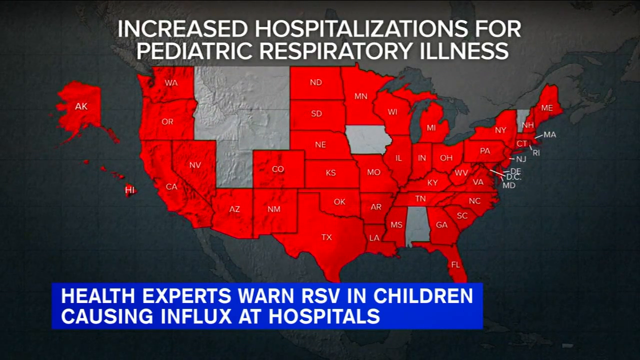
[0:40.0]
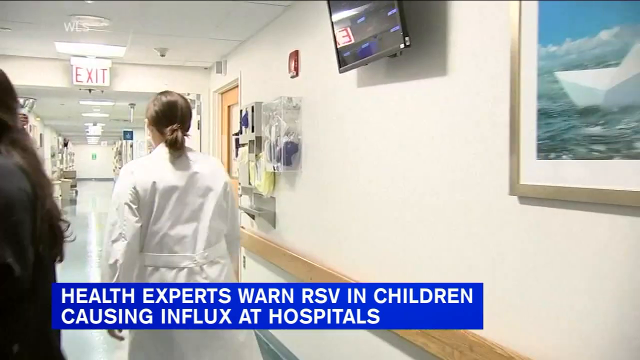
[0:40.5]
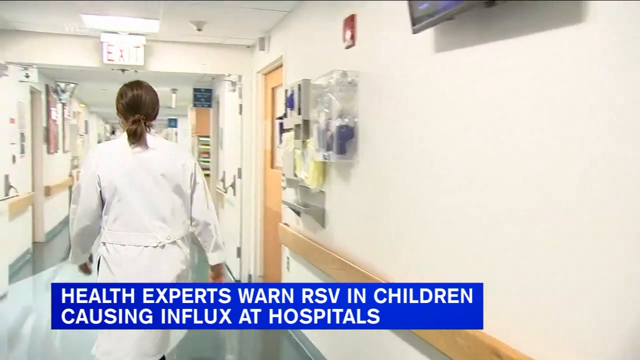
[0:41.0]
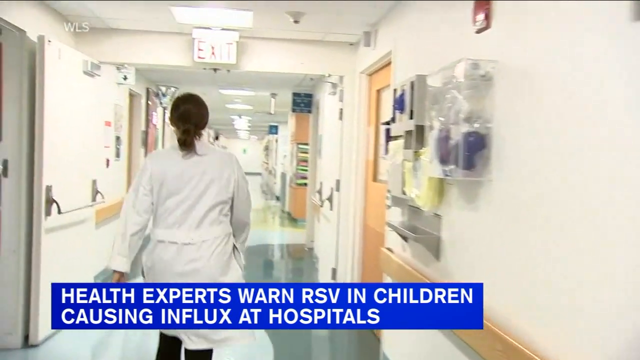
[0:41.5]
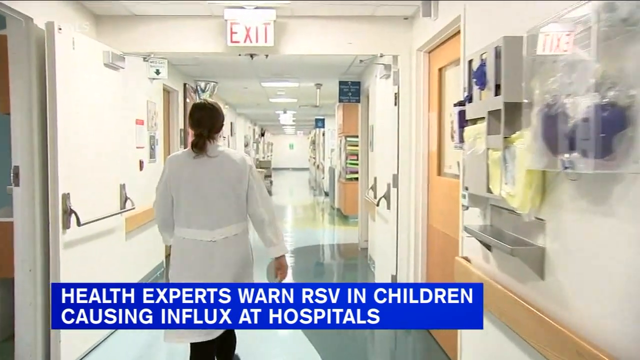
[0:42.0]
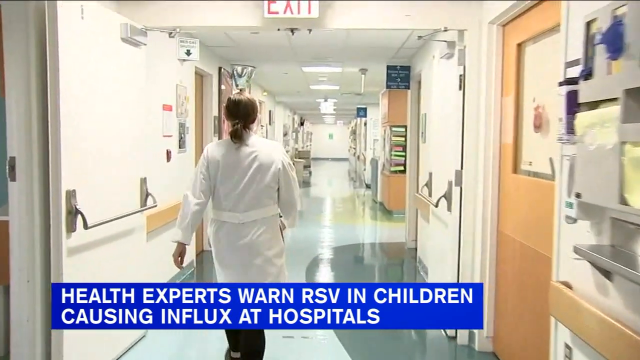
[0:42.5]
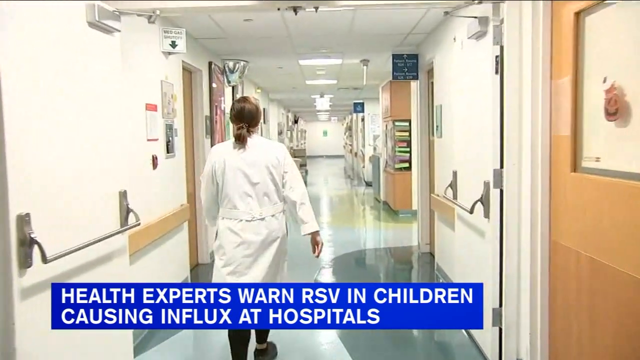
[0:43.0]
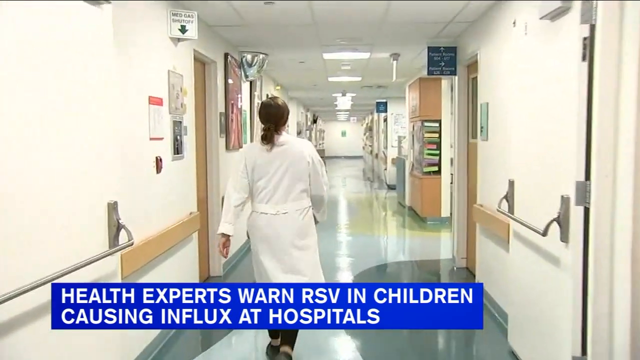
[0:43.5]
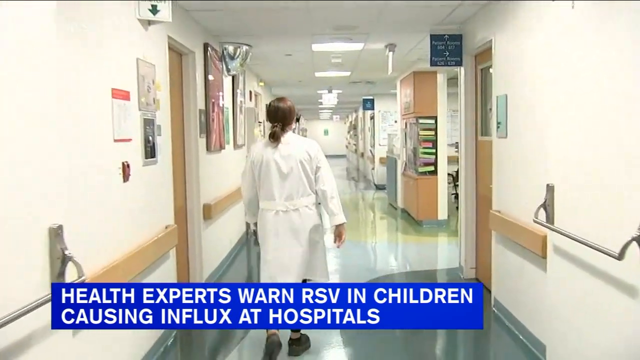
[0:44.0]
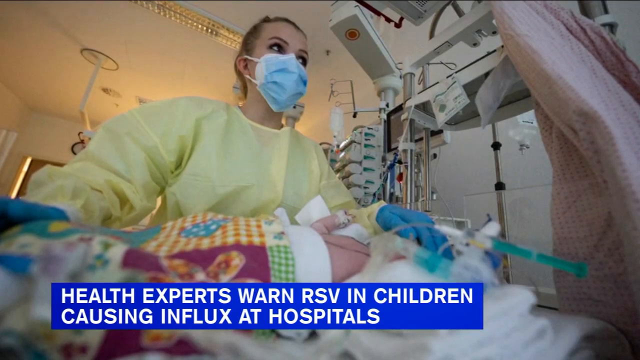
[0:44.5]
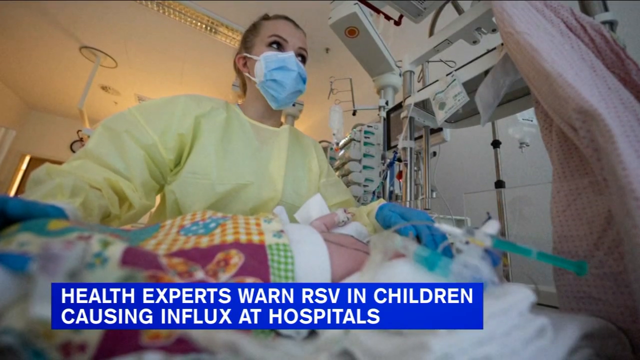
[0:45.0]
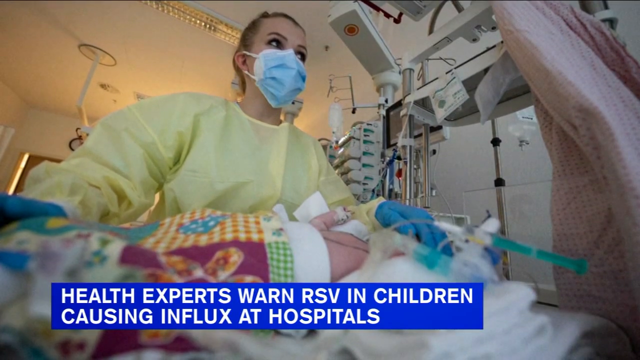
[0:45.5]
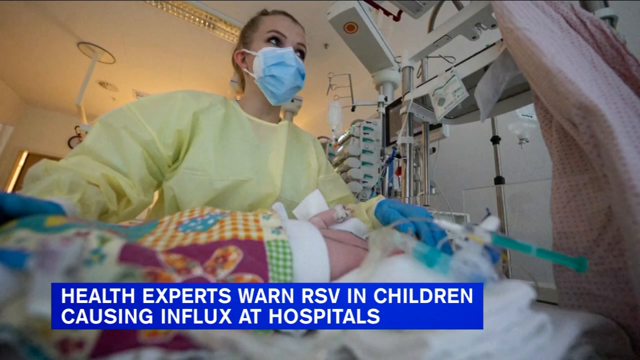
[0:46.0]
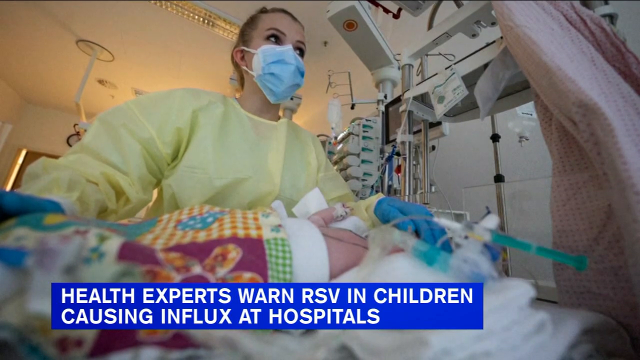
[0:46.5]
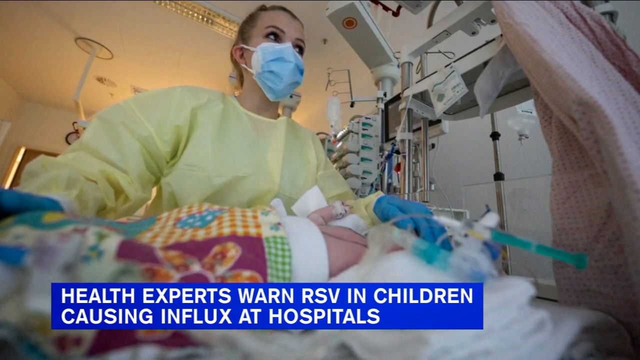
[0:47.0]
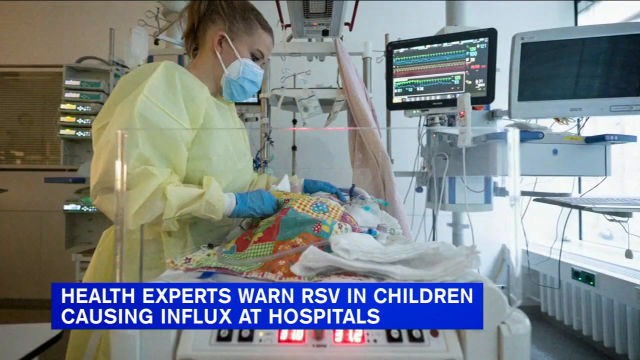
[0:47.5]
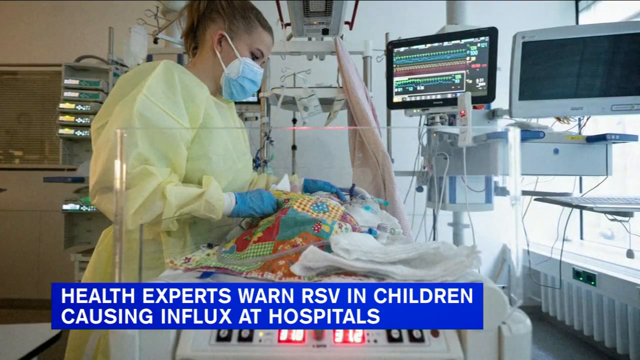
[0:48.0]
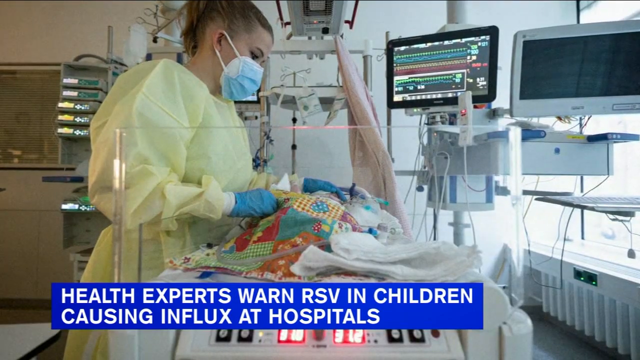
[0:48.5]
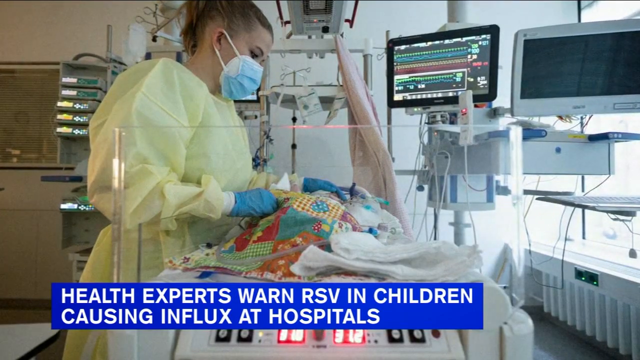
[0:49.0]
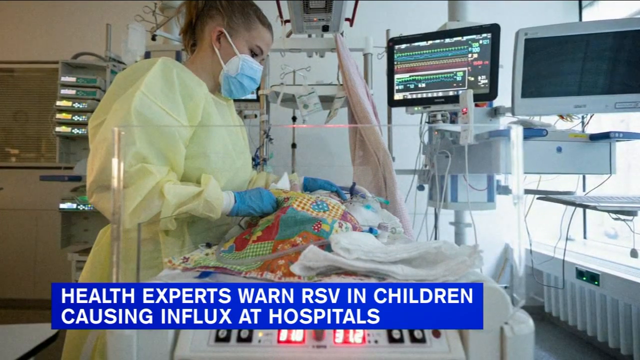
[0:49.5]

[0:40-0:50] The camera follows behind a doctor, a woman in a white lab coat, as she walks through a hospital hall. In the next scene, a woman in yellow scrubs and a blue medical mask attends to a small baby lying beneath her. The baby is wrapped in a quilt, with different tubes coming from its mouth. A farther-away side view of the same scene shows the woman on the left attending to the baby, who lies in bed on the right, with different monitors in the upper right of the frame. The doctor wears blue gloves.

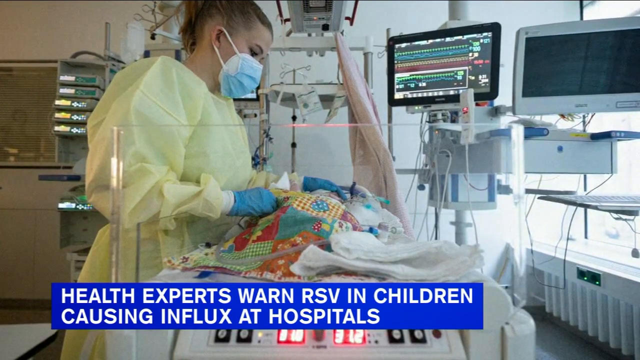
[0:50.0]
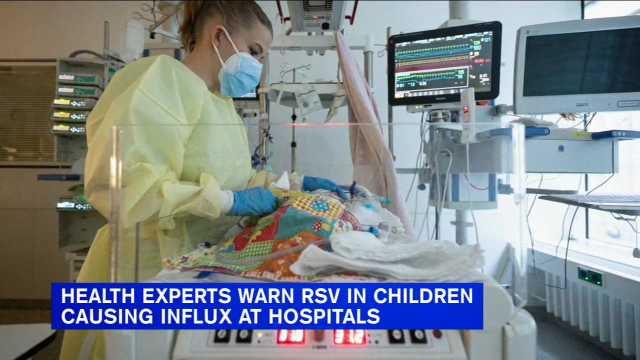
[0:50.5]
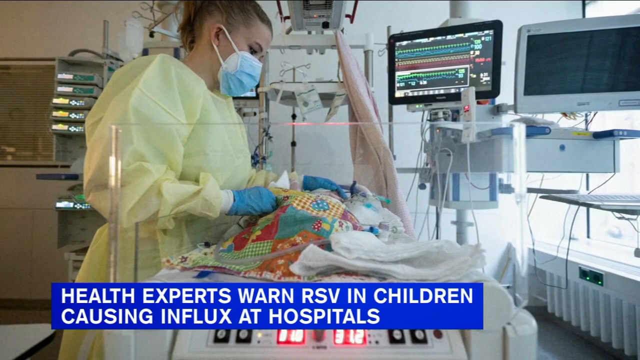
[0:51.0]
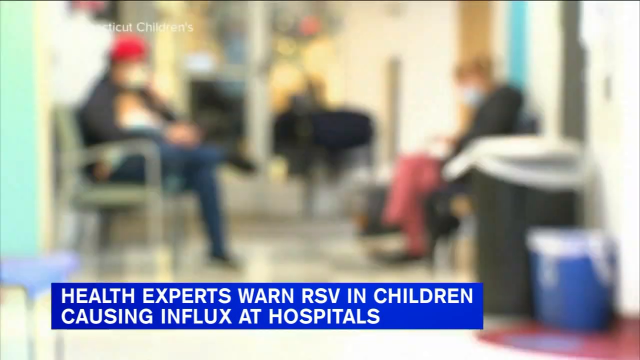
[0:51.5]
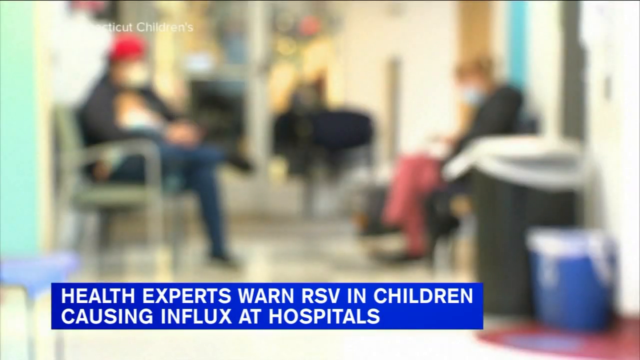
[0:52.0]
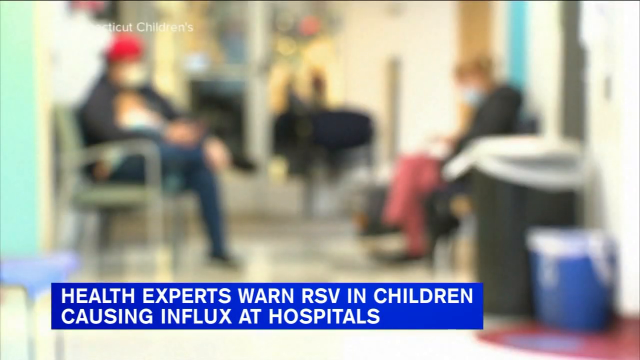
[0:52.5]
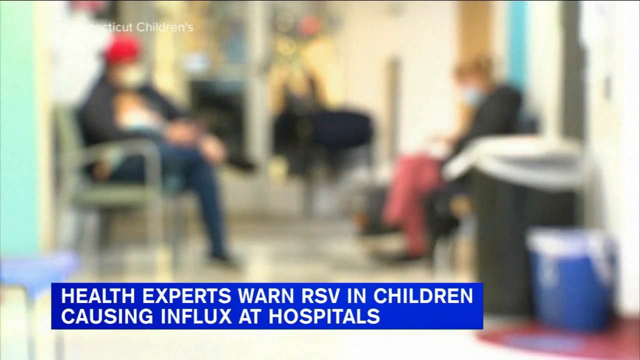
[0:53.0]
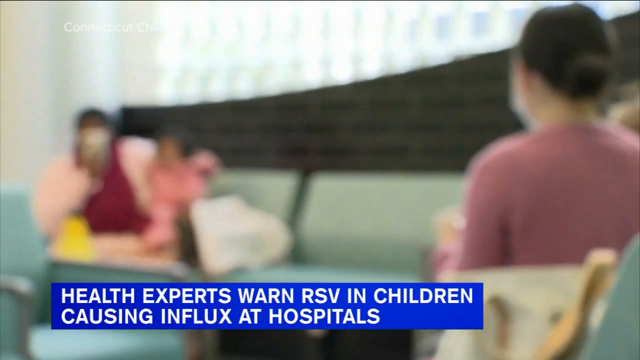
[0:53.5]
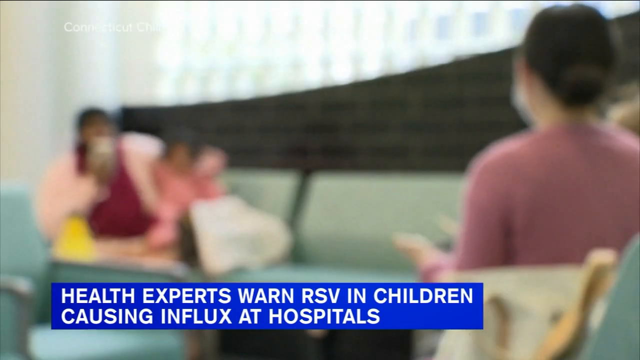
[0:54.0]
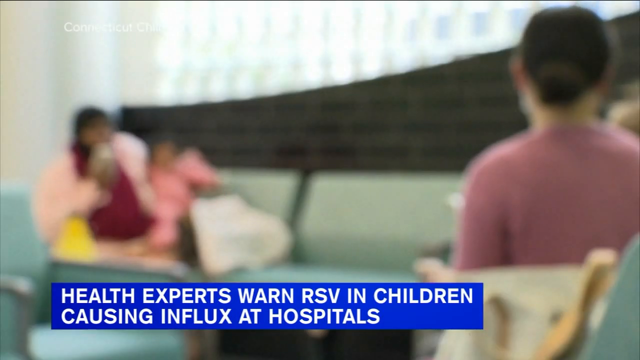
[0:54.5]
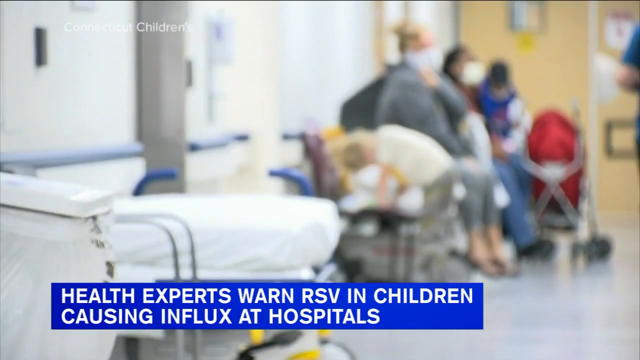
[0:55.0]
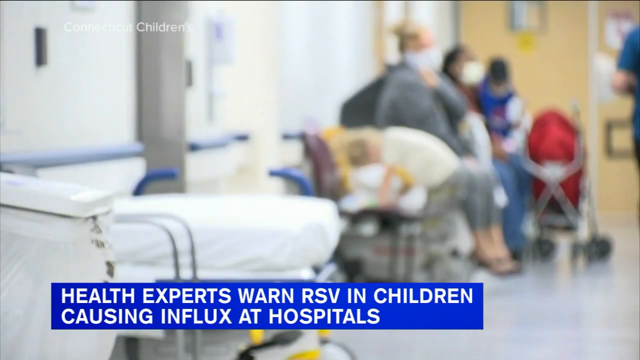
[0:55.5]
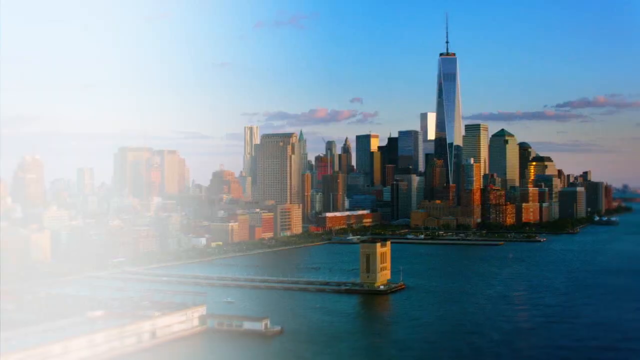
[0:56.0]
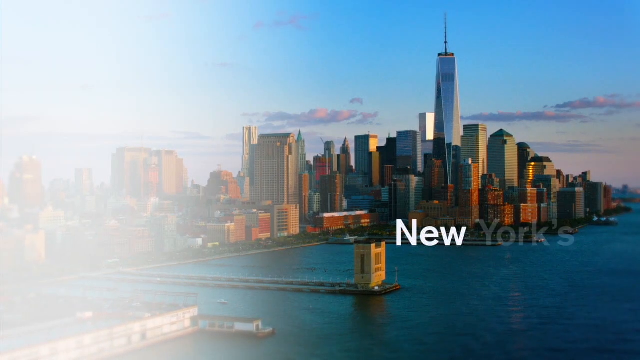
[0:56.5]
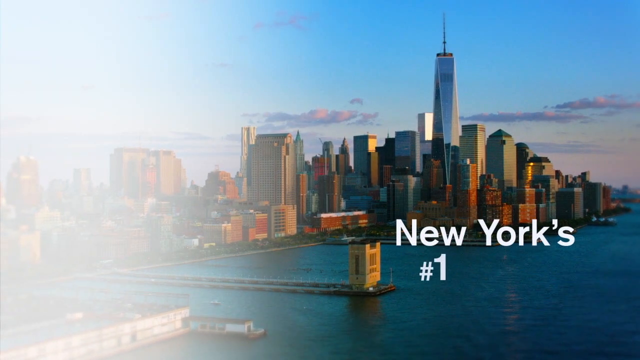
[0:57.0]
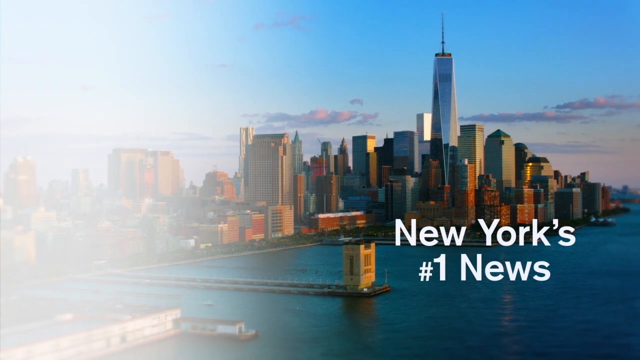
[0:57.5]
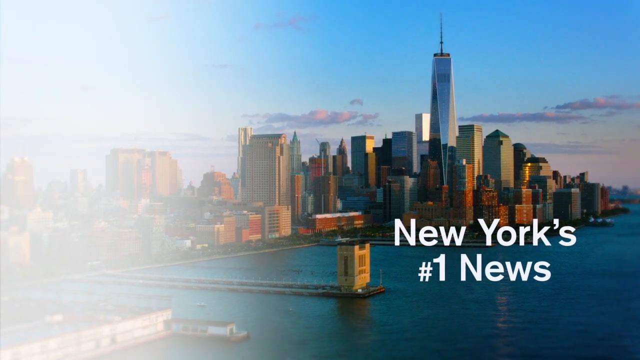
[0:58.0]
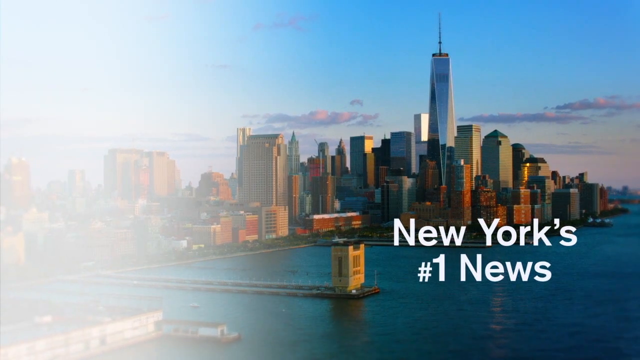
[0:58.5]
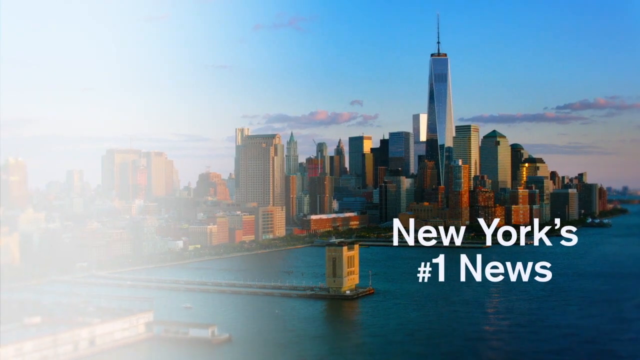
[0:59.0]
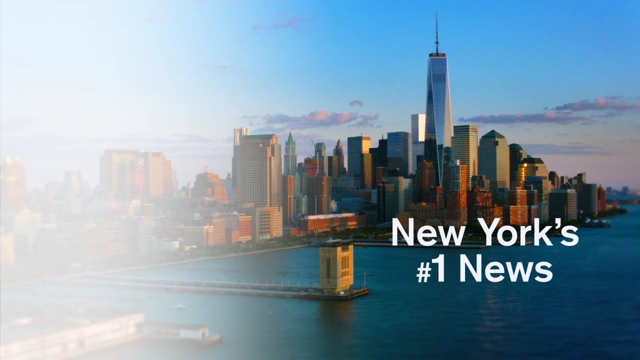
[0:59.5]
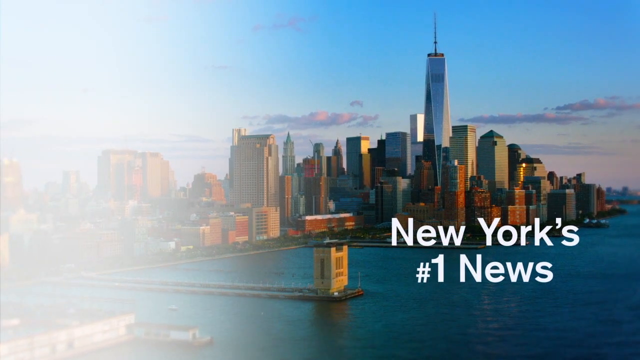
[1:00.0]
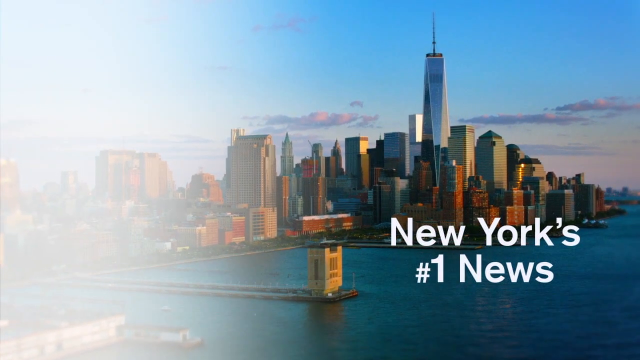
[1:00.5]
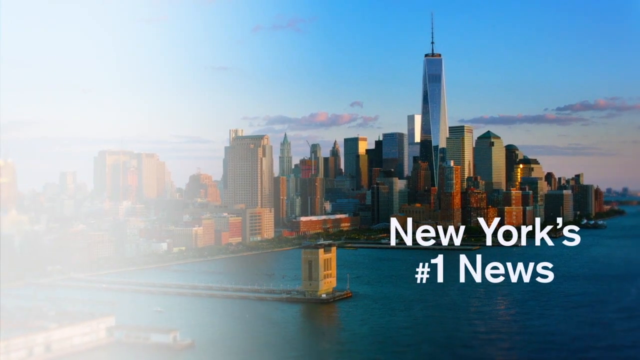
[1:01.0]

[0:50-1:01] A doctor in yellow scrubs, a blue medical mask and blue medical gloves attends to a small baby. The scene shifts to what appears to be a hospital waiting room; the shot is blurry and unclear, with about three people sitting in seats in the background. Another blurry shot appears to show a different waiting room that has couches instead of single chairs; what appears to be an older child and a smaller child sit on one of the couches, and a woman in a wheelchair, seen from the back, is on a couch in the lower right. Next comes another waiting area inside the hospital, also blurry. Finally, an aerial view of New York City rotates around the city, with text on the screen that says "New York's number one news."